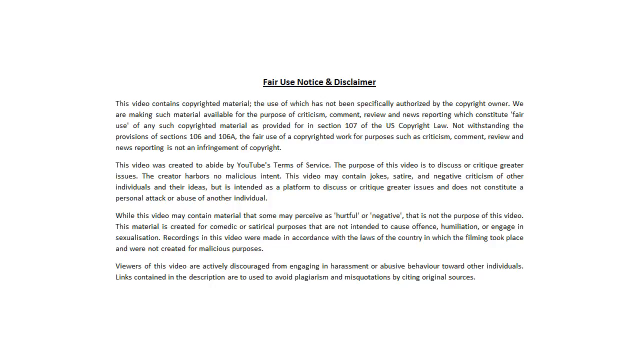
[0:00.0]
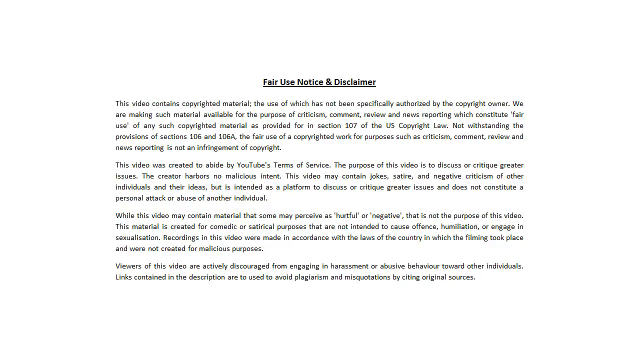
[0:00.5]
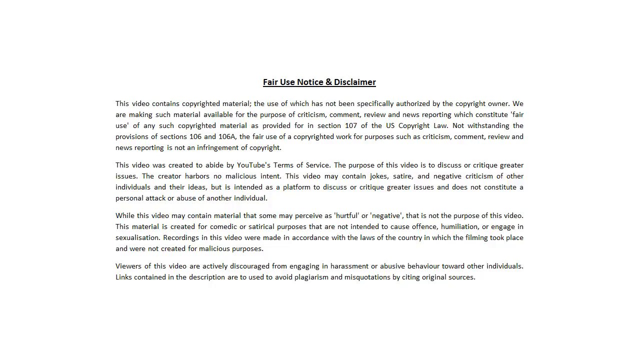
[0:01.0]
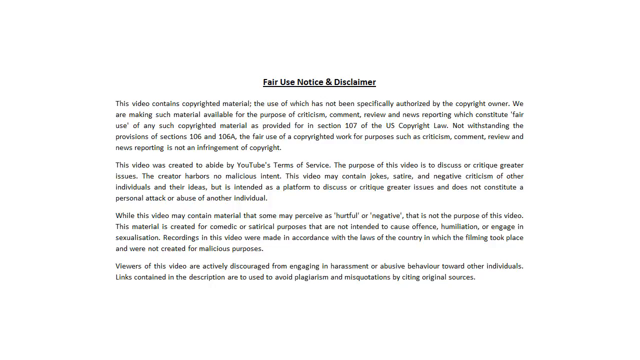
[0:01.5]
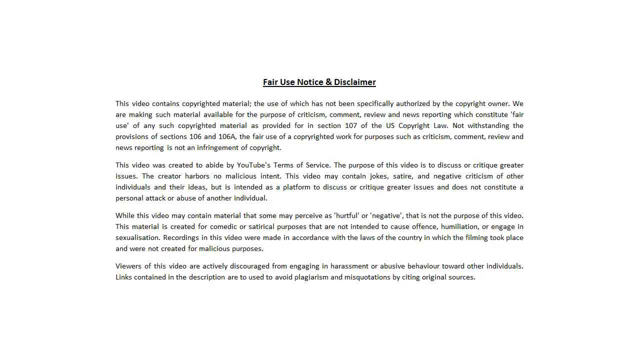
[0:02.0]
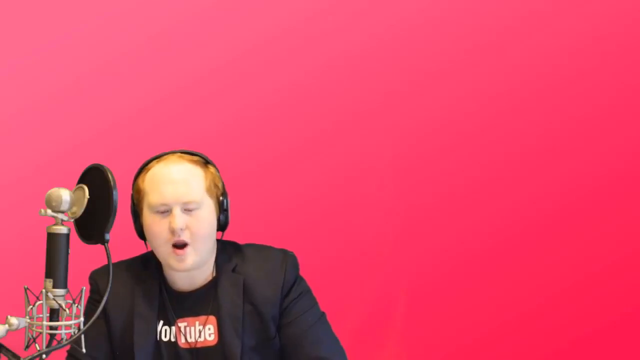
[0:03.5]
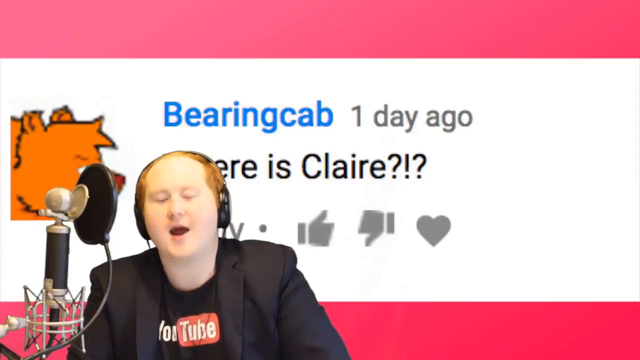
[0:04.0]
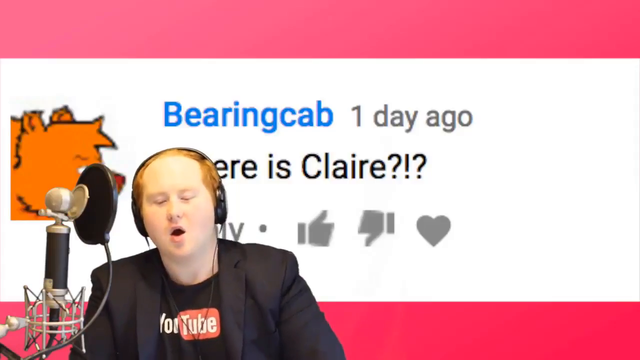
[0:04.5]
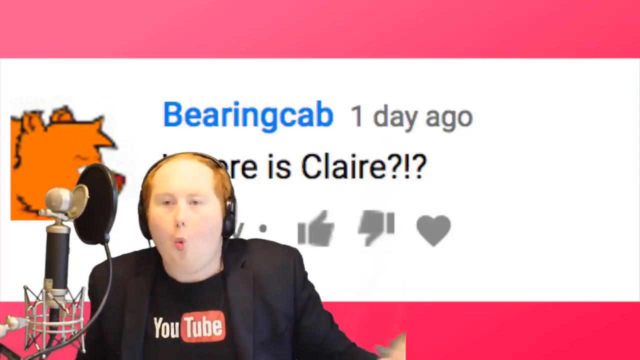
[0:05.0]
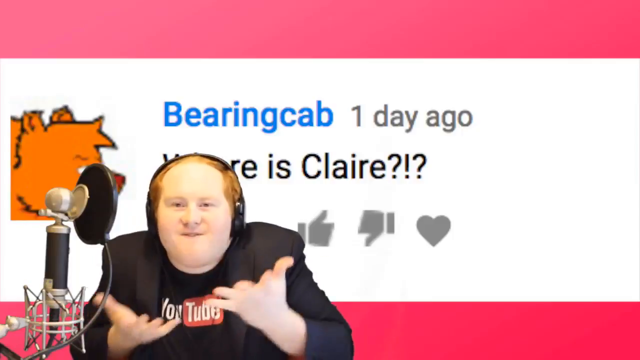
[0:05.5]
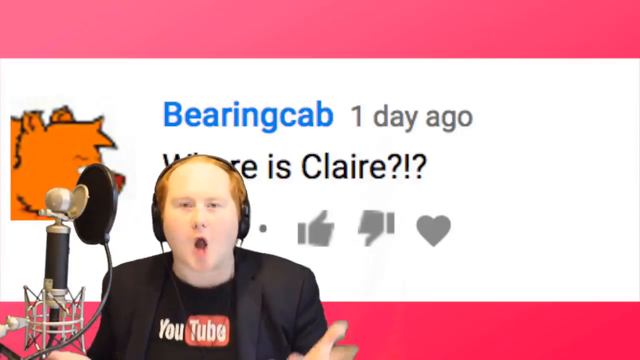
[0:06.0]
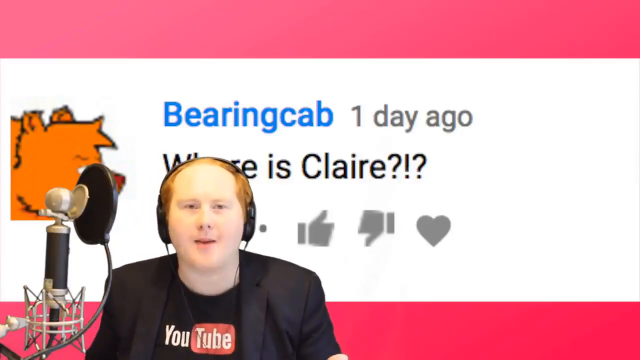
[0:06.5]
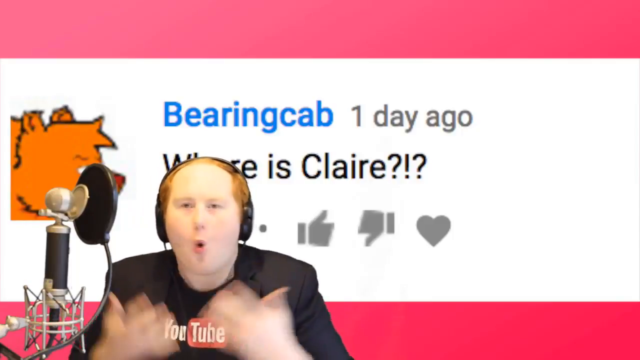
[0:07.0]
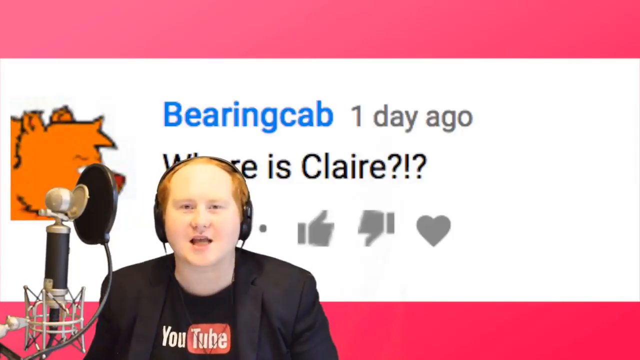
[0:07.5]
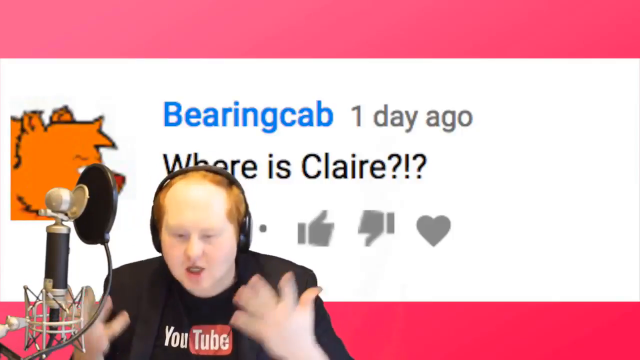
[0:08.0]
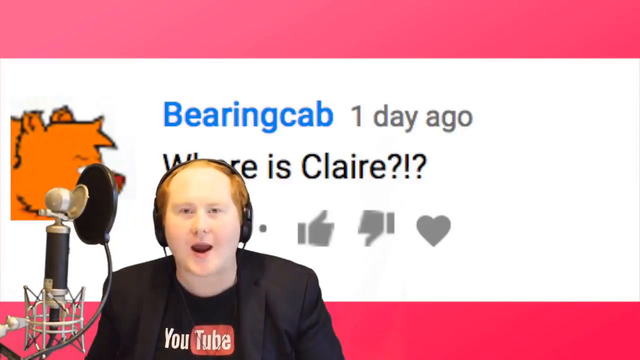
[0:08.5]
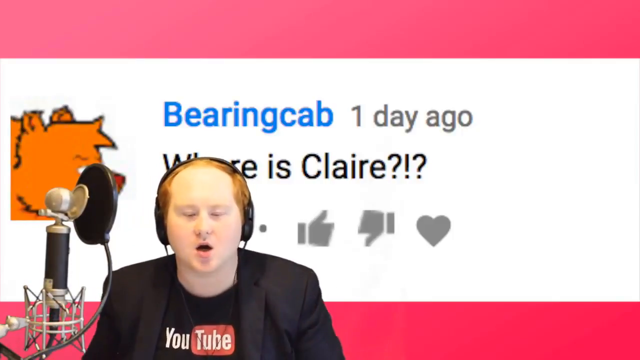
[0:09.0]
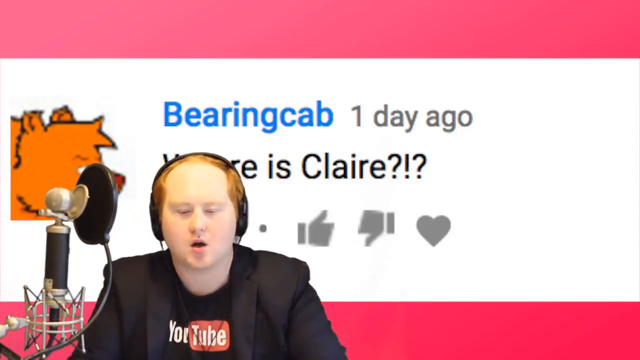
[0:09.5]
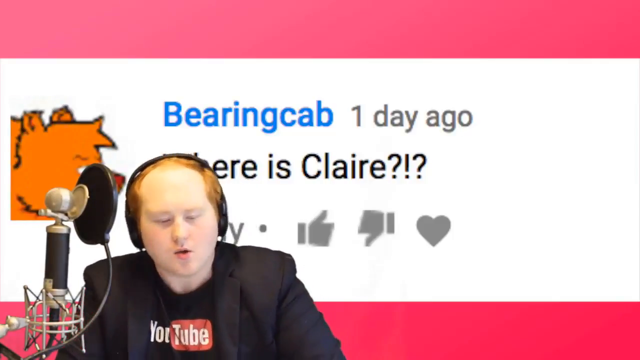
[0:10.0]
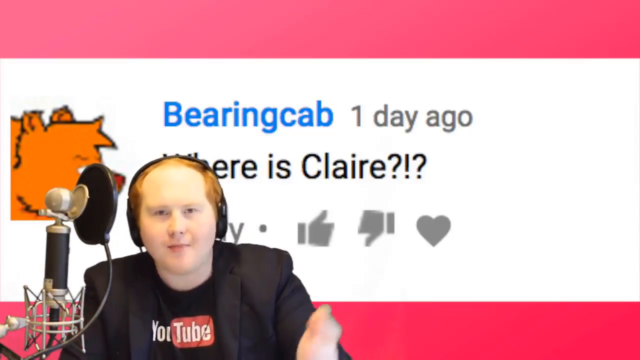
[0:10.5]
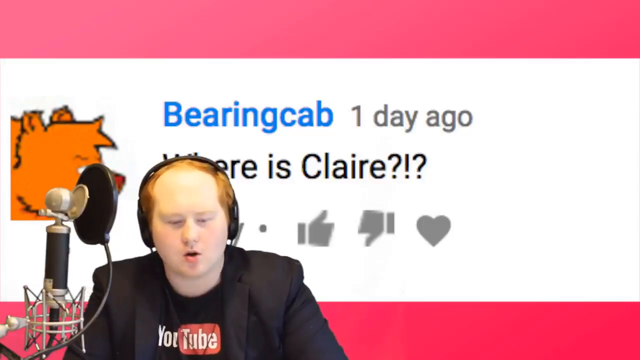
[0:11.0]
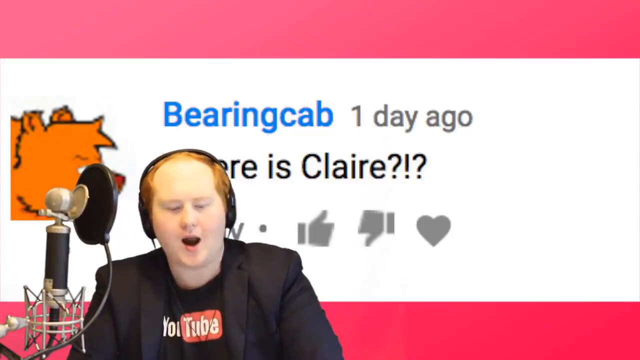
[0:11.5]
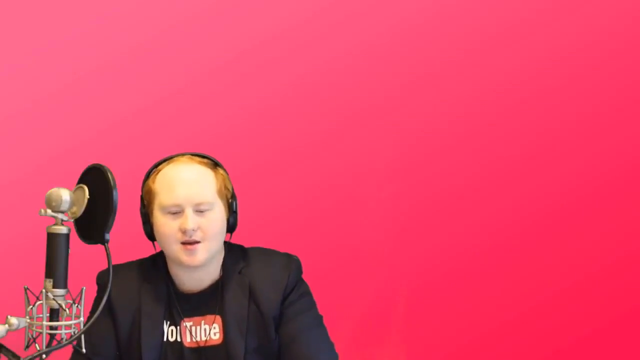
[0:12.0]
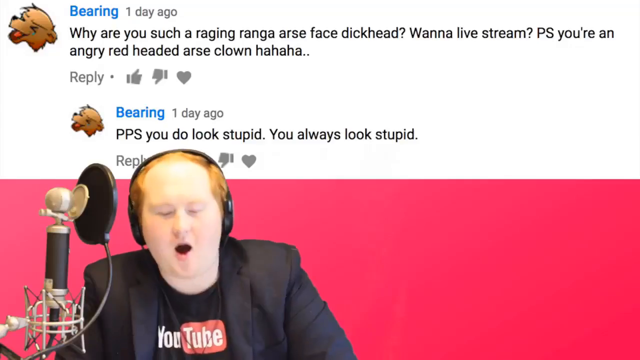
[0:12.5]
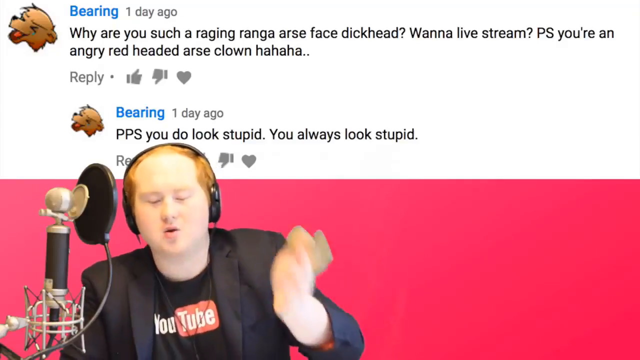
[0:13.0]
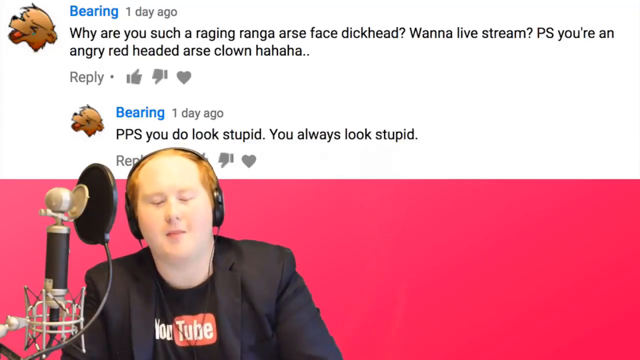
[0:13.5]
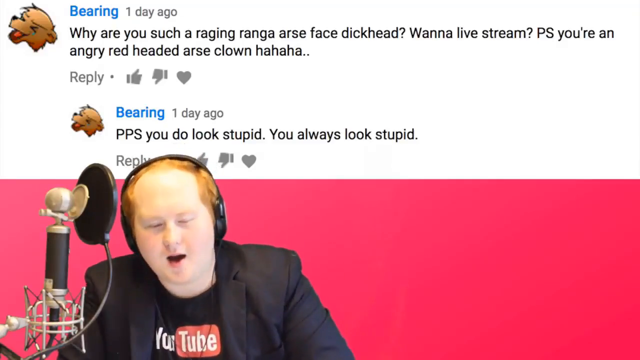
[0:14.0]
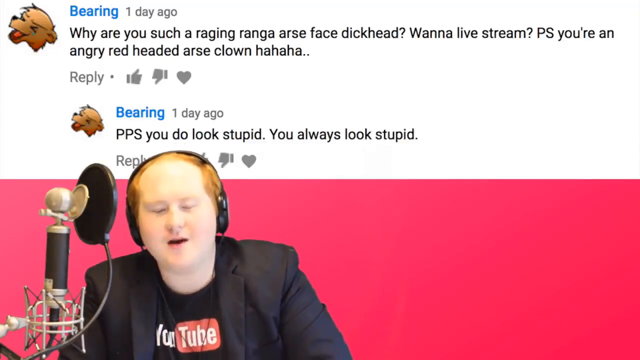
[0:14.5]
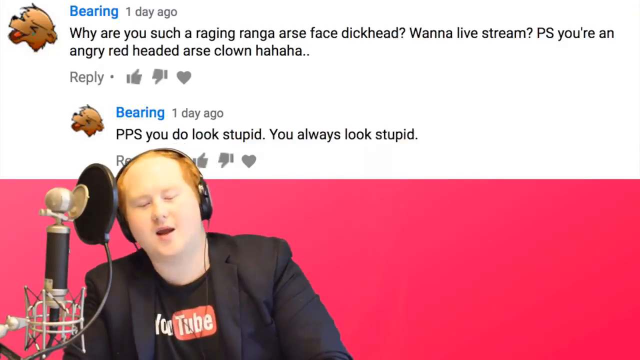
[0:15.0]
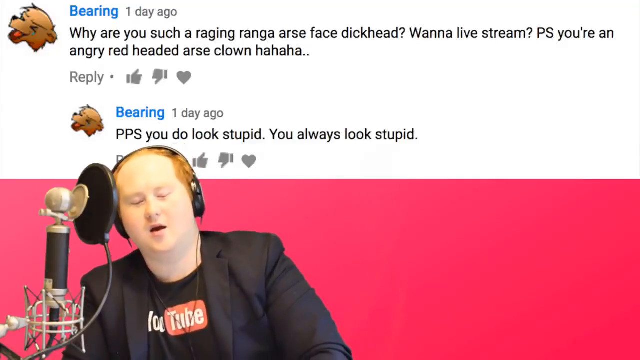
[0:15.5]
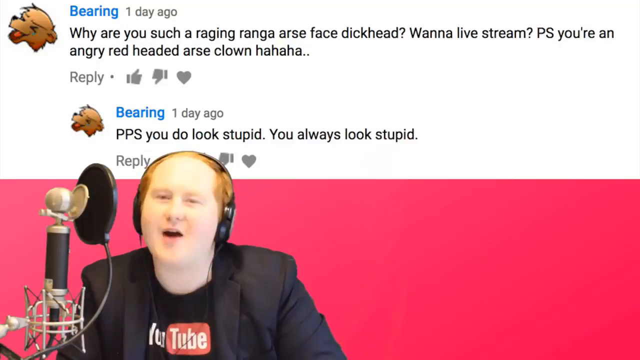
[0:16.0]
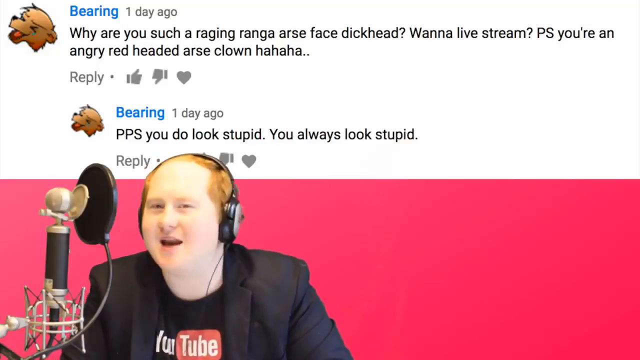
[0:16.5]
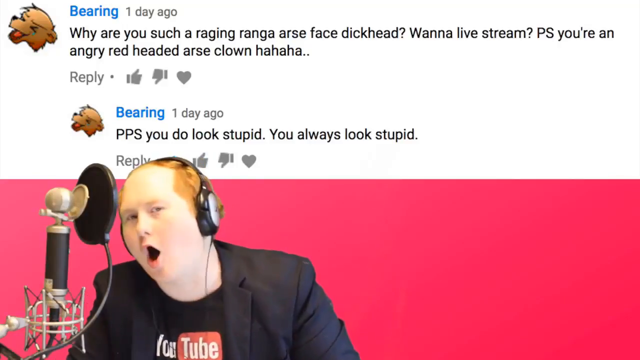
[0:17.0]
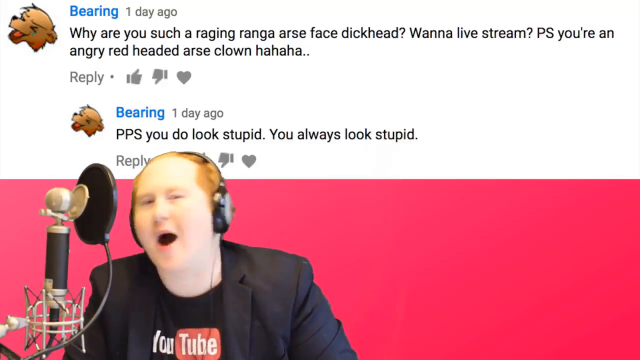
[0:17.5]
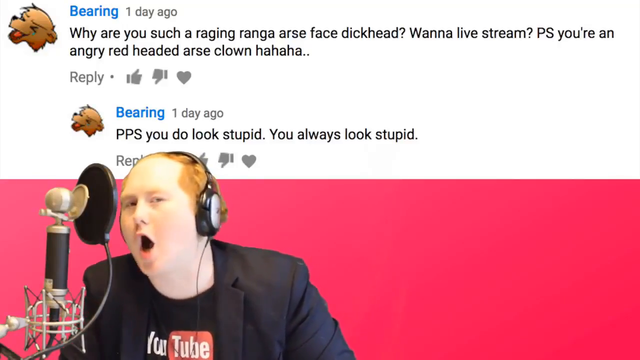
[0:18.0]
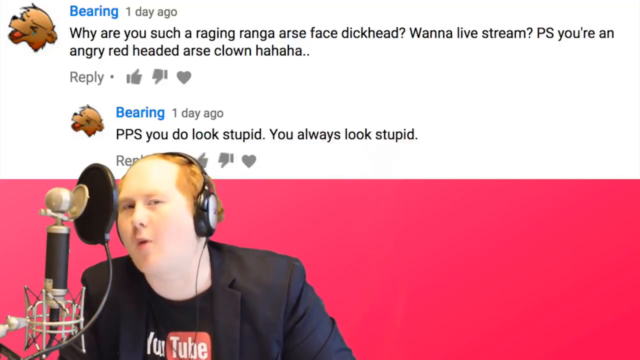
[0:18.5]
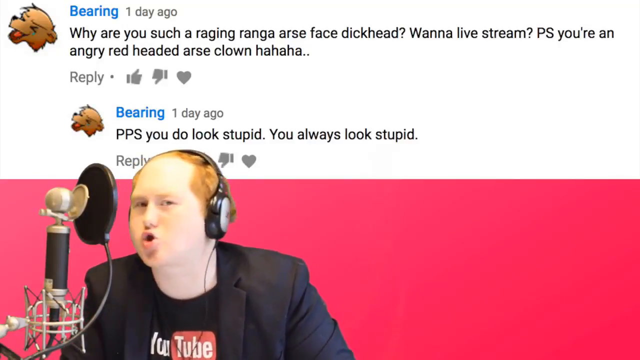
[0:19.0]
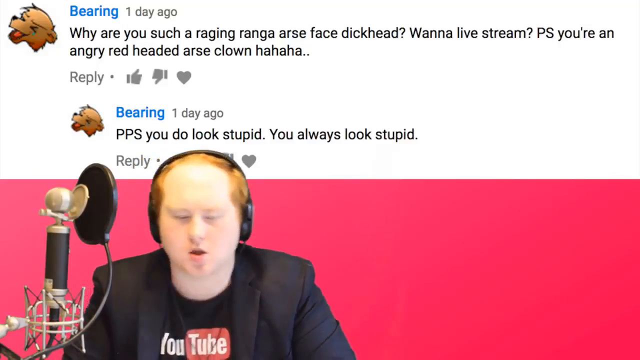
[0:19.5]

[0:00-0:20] The video opens with a Fair Use notice and disclaimer in black text on a white background, the screen slightly darkened from gray to black along the bottom edge. The disclaimer quickly disappears, and a person at a microphone appears against a pink background. He is fair-skinned with red hair and wears a dark blazer, a black t-shirt with the YouTube logo on his chest, and a headset with black earphones covering both ears. He speaks into the microphone, appearing somewhat animated. Behind him is a representation of what he is interacting with on a computer screen that is out of view. To one side is a brown cartoon image of a bear showing its face, ears and a small part of its torso. Next to it, in blue letters, is the identifier "Bearingcab", with the comment's time frame, "one day ago", right beside it. Below that, in black text, is the question "Where is Claire?", along with icons that can be selected: a thumbs up, a thumbs down and a heart emoji. The man seems to grow very excited and upset at this question, gesticulating with his hands, his expressions a bit angry. An additional pop-up then appears behind him showing what he is reading; the comments appear to be critical of him, with a lot of expletives and a lot of criticism.